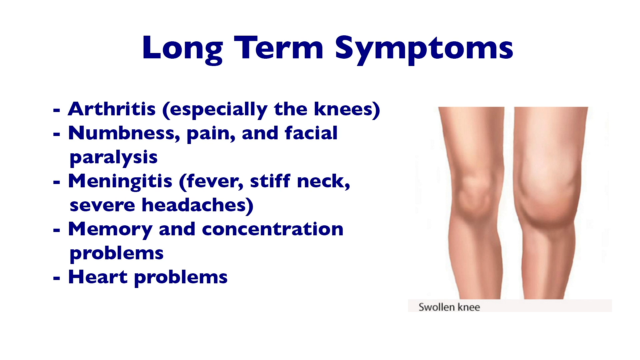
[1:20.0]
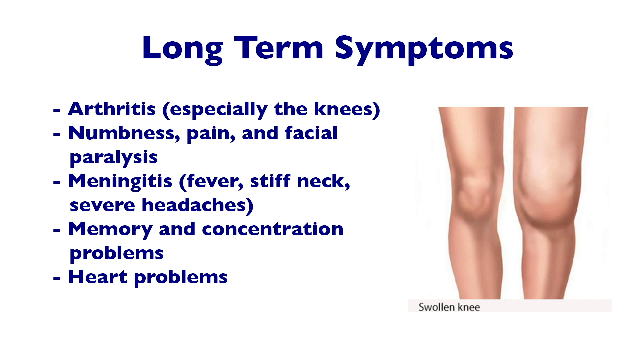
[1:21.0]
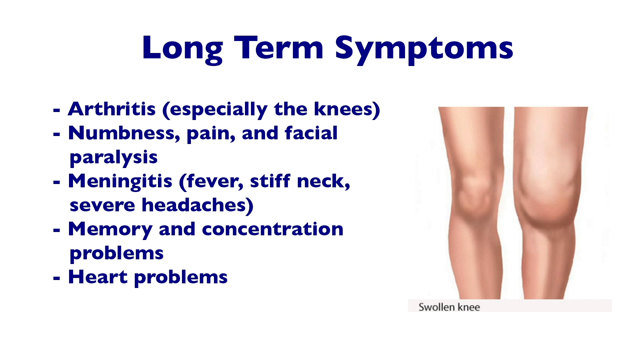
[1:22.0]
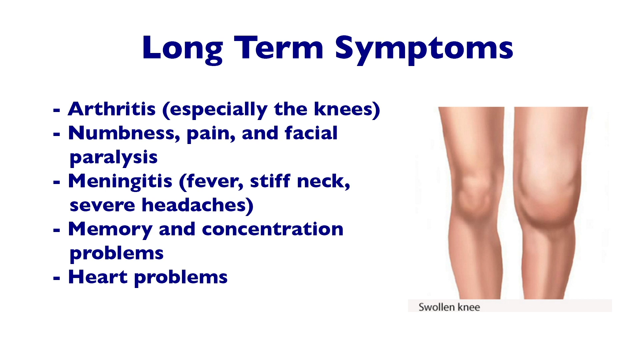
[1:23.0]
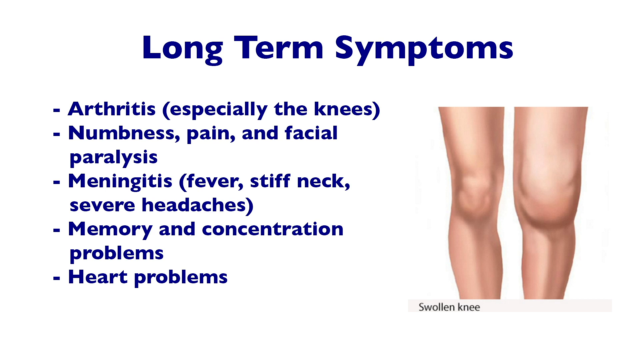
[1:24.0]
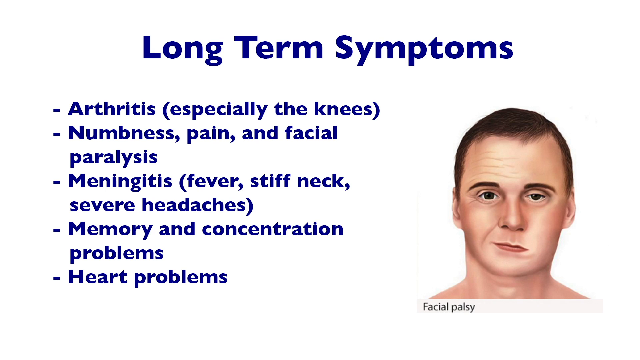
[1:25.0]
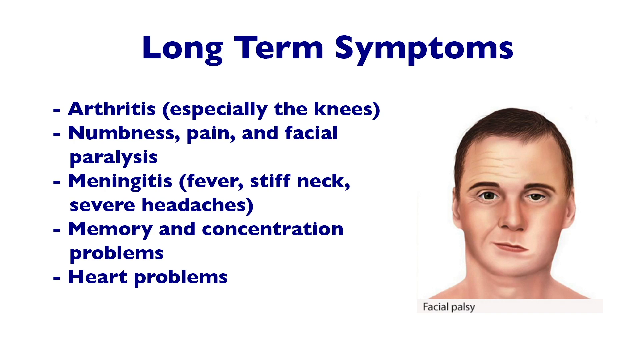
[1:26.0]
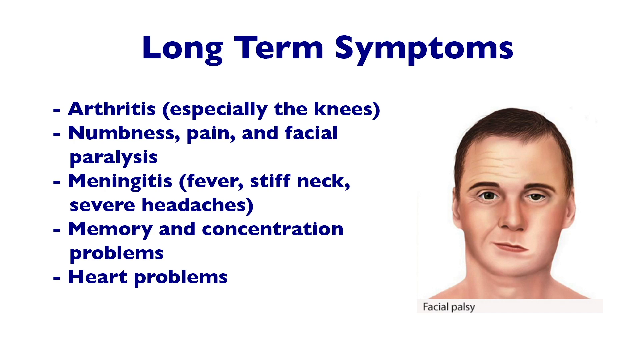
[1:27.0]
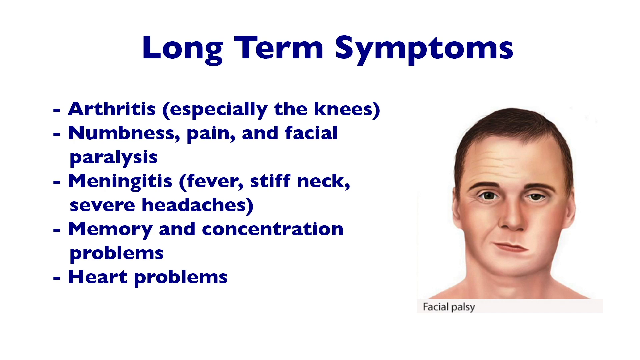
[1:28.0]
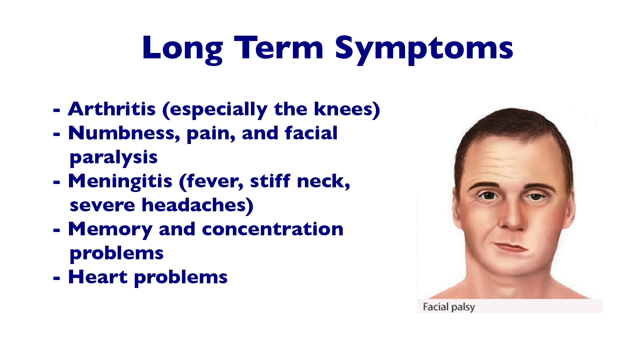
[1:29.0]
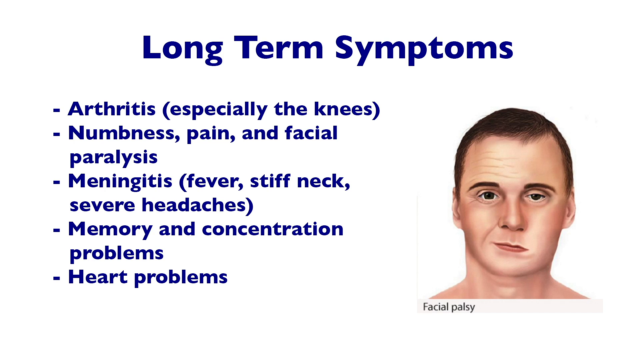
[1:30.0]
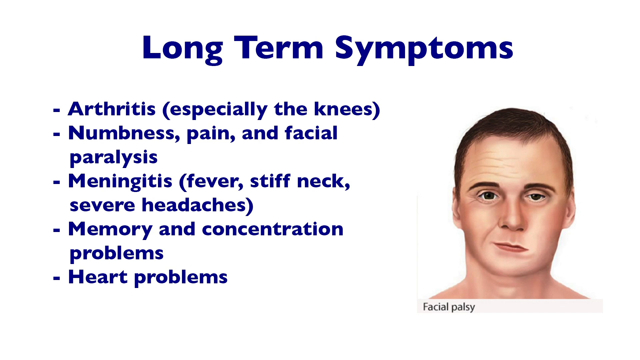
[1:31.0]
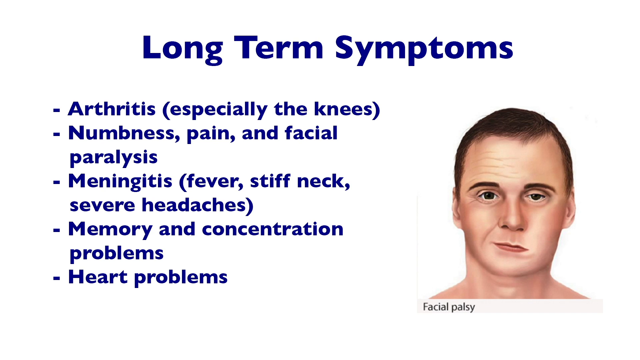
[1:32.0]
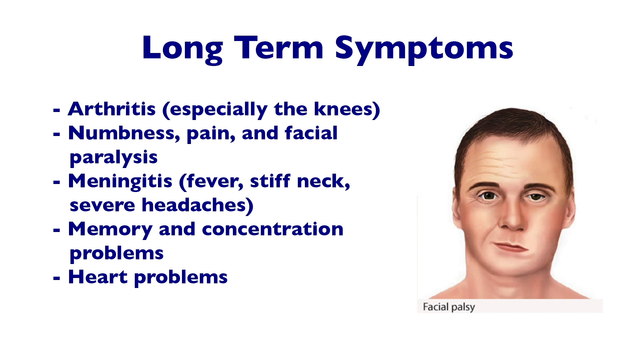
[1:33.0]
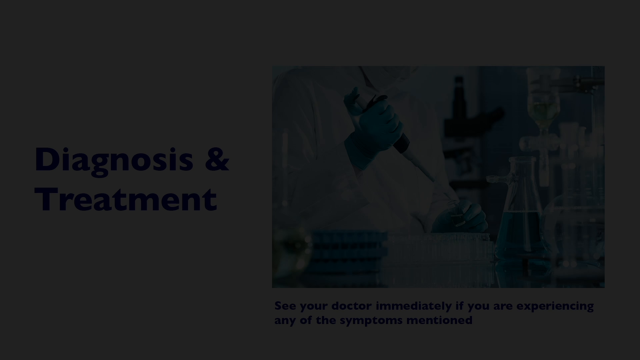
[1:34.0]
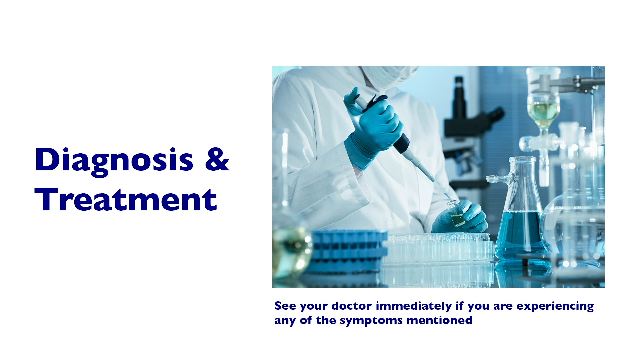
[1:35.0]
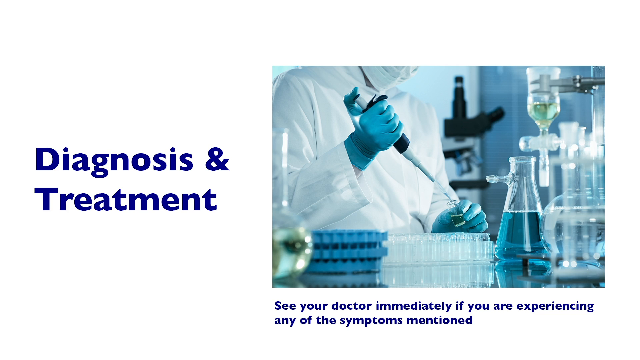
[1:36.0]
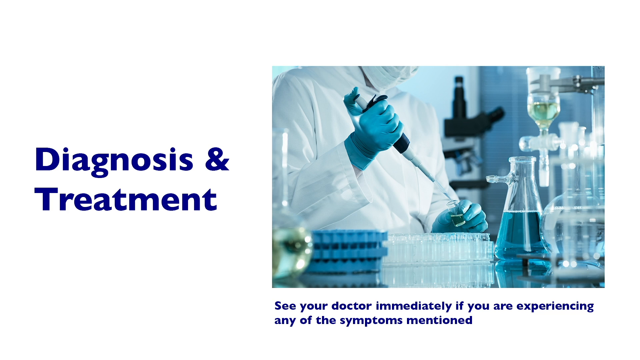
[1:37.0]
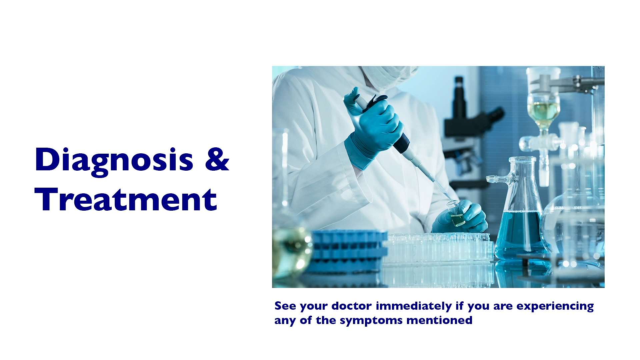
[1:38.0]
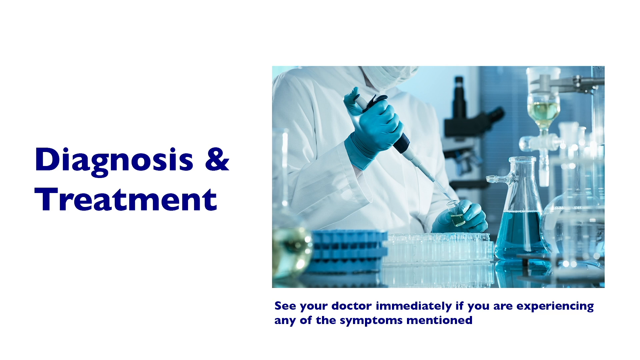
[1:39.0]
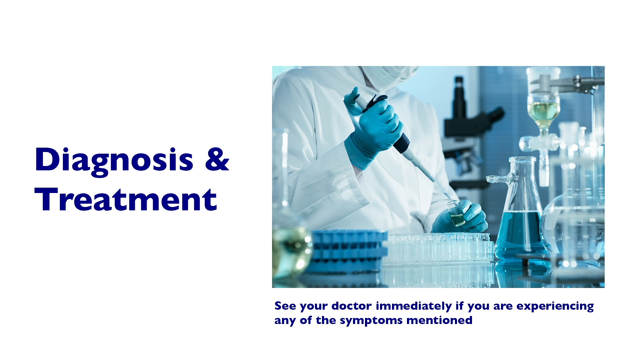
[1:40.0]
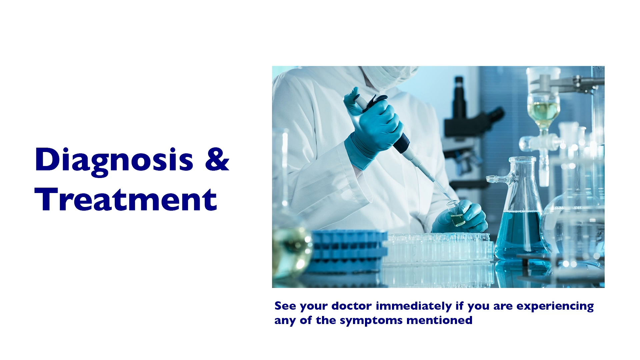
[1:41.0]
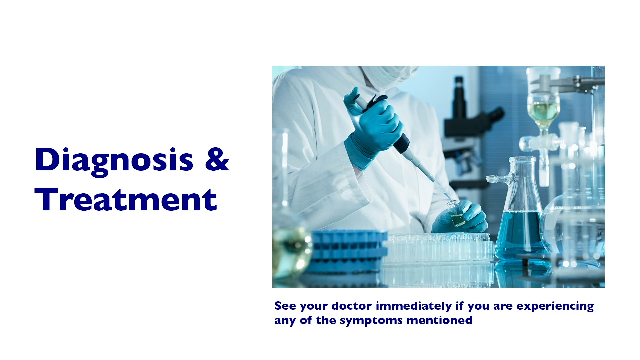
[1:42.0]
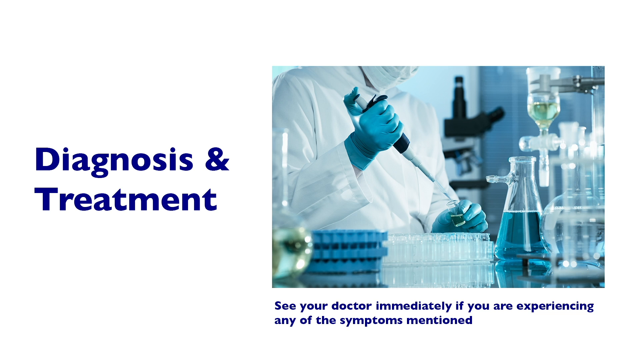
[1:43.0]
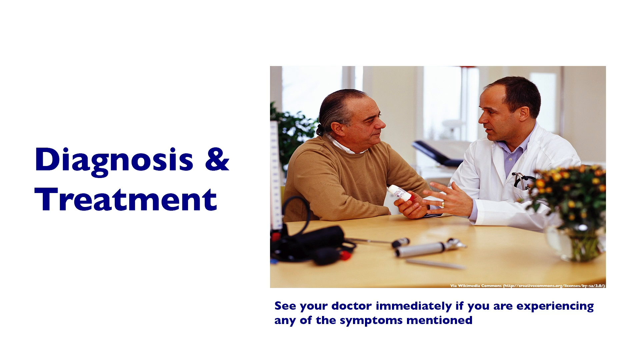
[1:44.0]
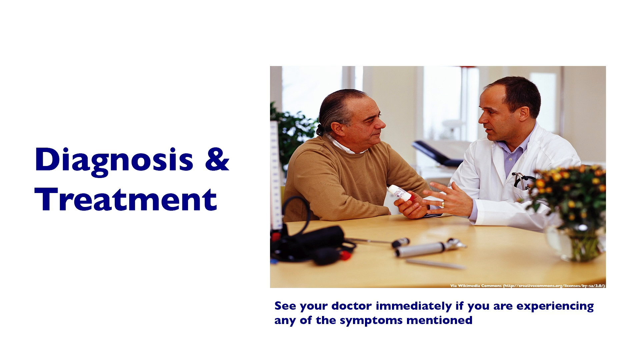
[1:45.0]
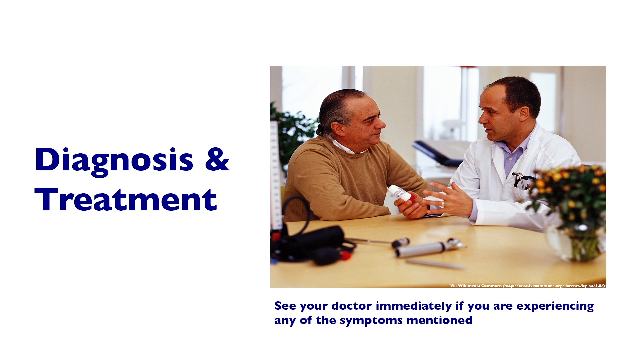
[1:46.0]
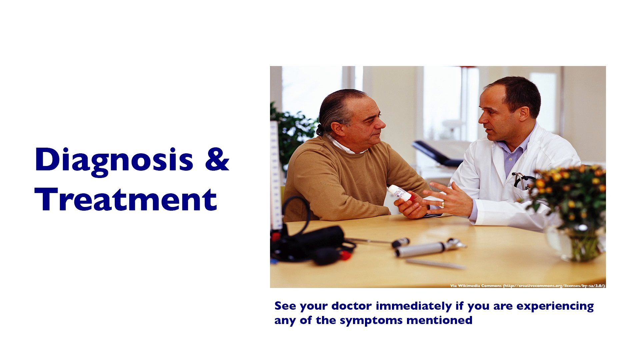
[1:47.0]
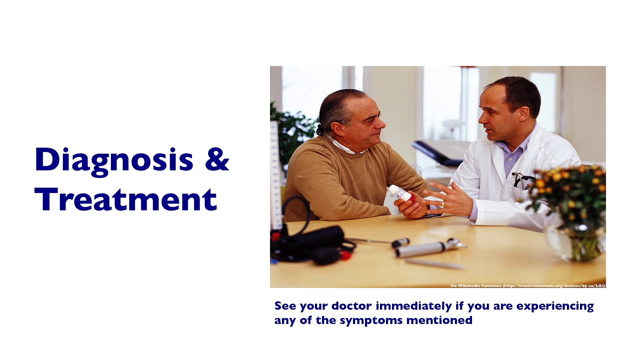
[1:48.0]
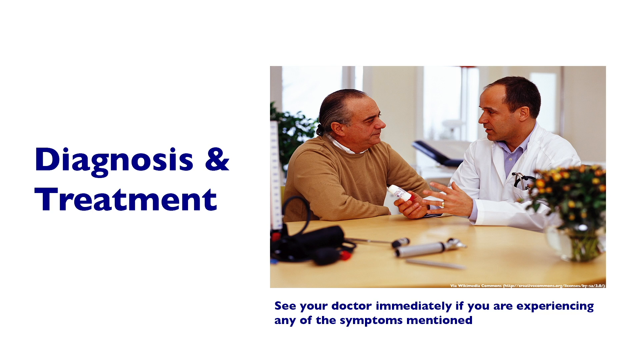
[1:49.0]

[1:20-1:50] The long-term symptoms screen continues, and the image on the right-hand side changes from the swollen knees to facial palsy, showing an animated image of mainly a person's face and what the condition looks like. The screen then changes to "diagnosis and treatment" on the left-hand side, and on the right-hand side an image of a lab and a doctor, seen from the torso, holding a very long needle-like utensil. The doctor wears blue gloves, and there is a beaker full of blue liquid. Underneath the image it says "see your doctor immediately if you are experiencing any of the symptoms mentioned." The next image shows a doctor consulting an older patient on the left-hand side. The patient appears to be about 60 years old, wears a brown shirt and has short hair. The doctor wears a white jacket and appears to be around 40 years old. They are sitting at a table.